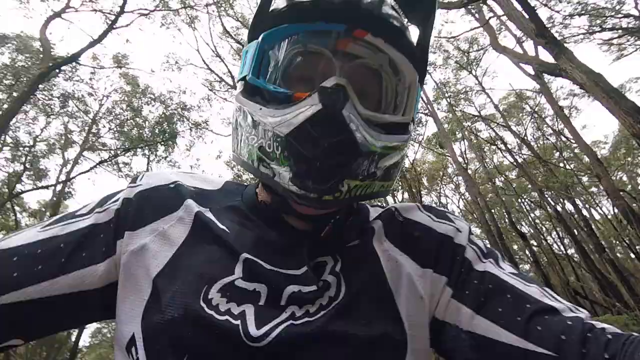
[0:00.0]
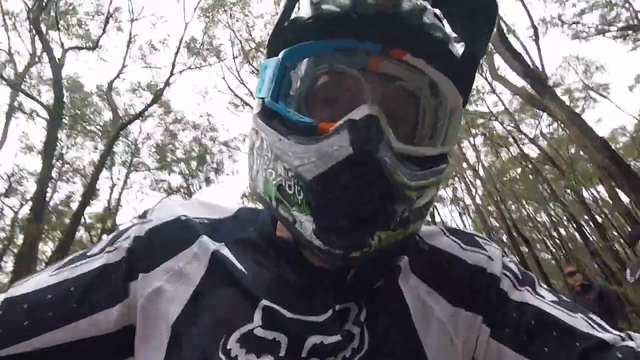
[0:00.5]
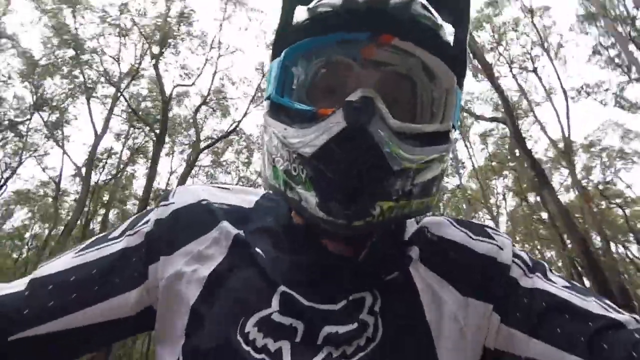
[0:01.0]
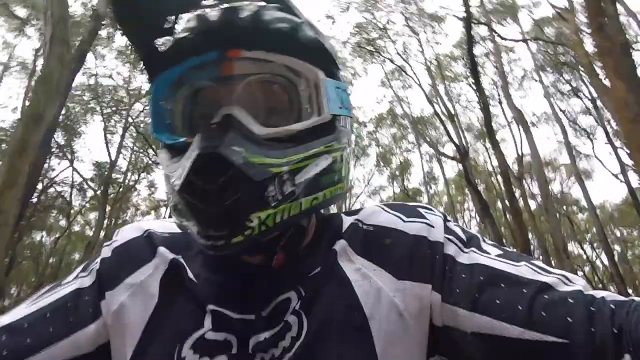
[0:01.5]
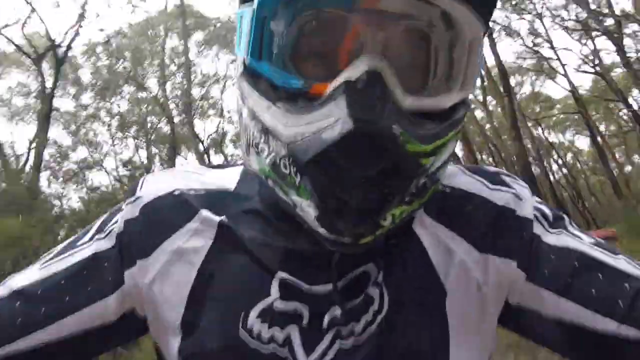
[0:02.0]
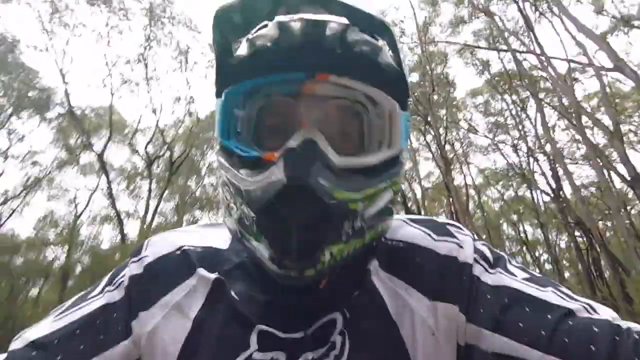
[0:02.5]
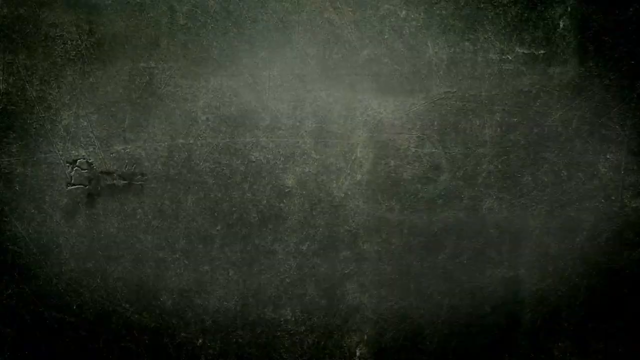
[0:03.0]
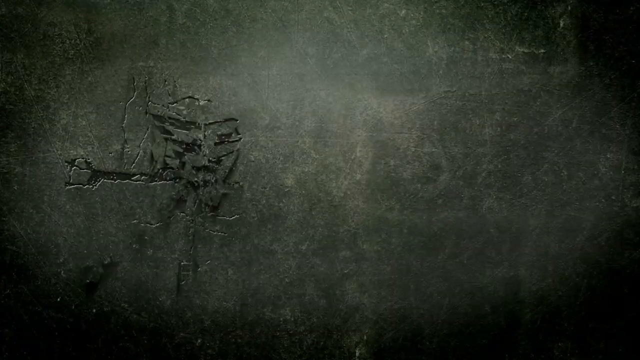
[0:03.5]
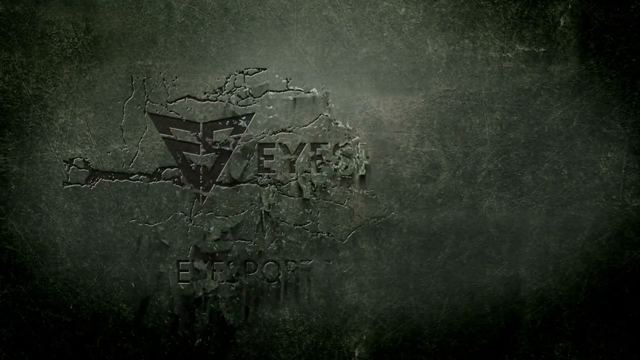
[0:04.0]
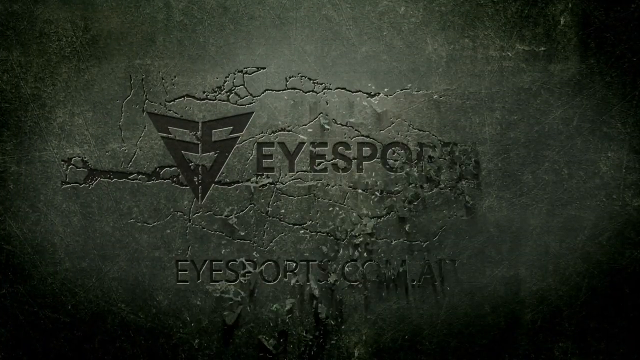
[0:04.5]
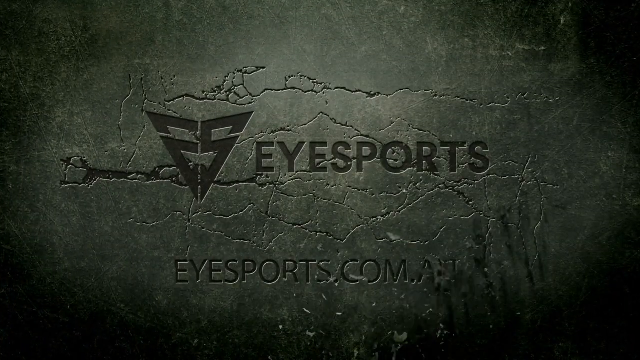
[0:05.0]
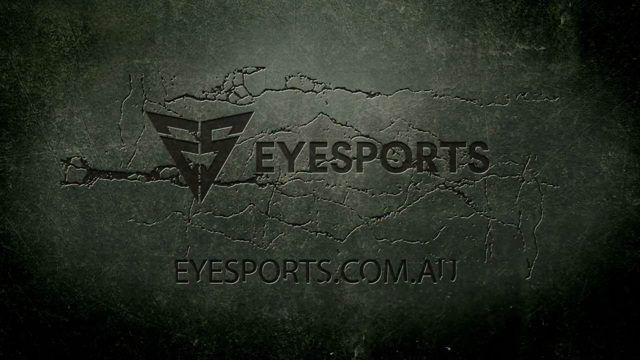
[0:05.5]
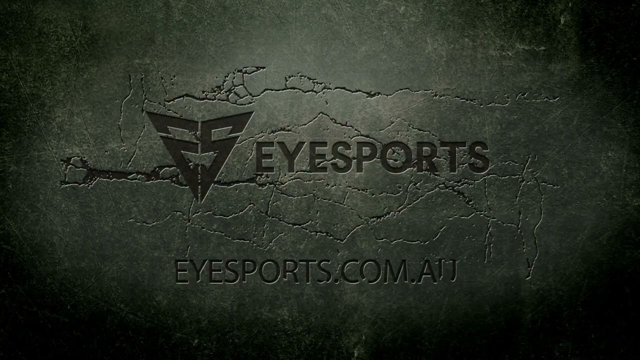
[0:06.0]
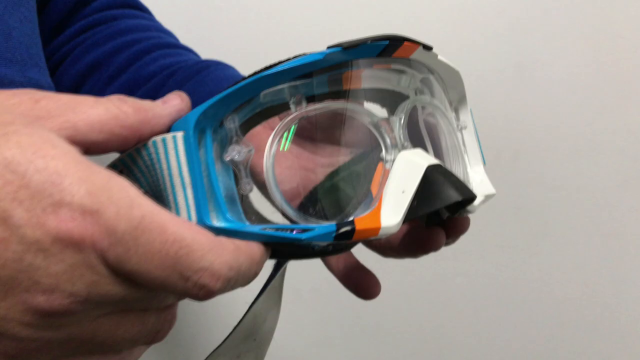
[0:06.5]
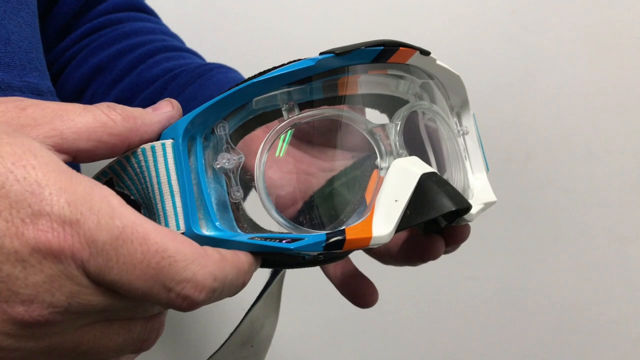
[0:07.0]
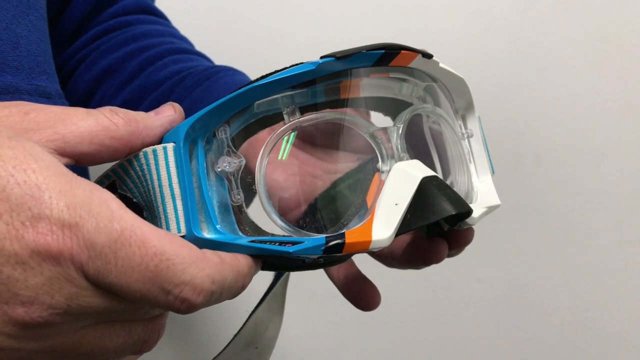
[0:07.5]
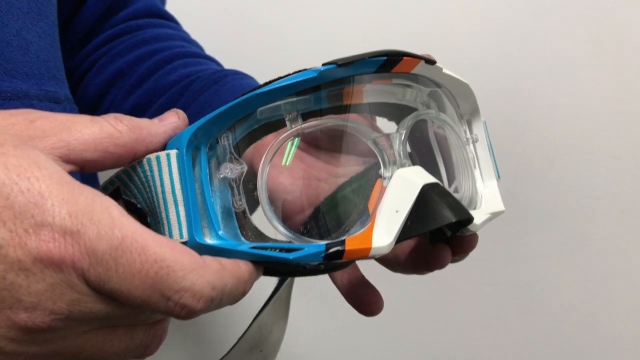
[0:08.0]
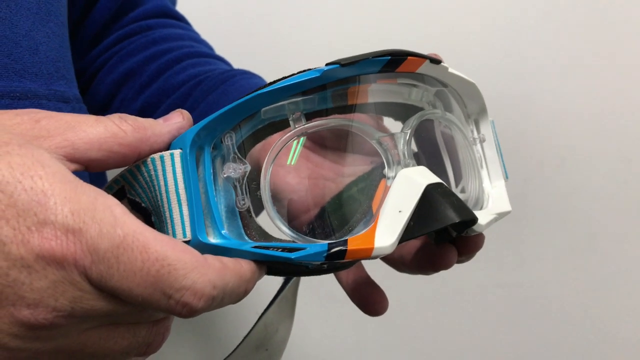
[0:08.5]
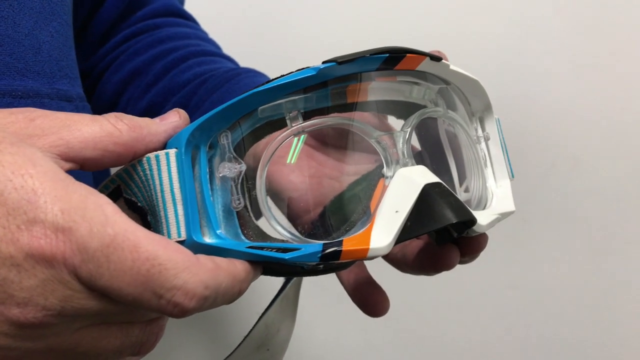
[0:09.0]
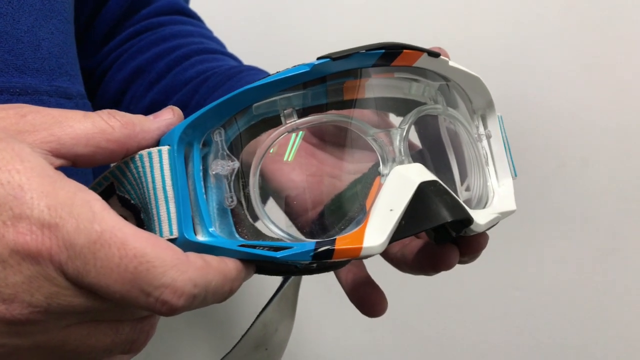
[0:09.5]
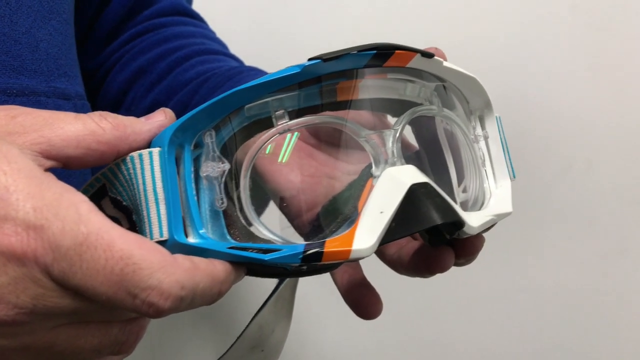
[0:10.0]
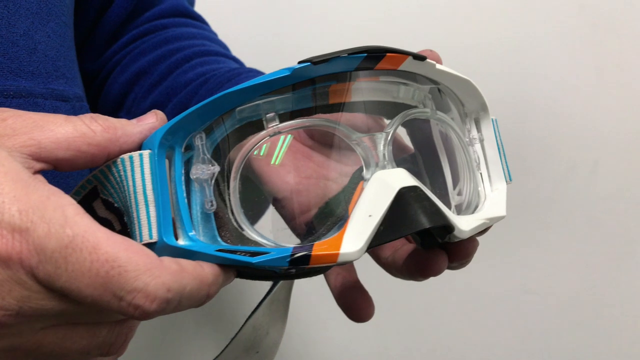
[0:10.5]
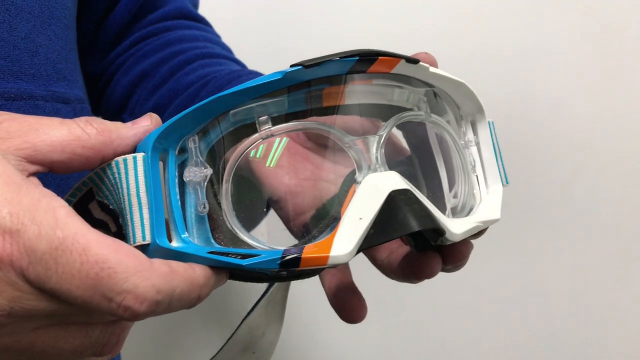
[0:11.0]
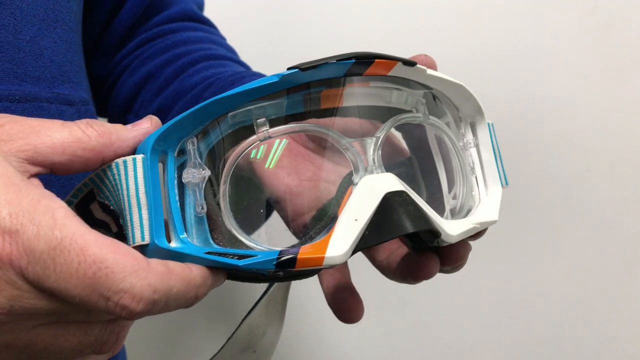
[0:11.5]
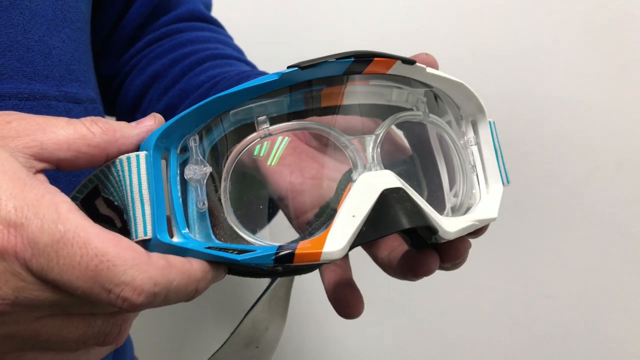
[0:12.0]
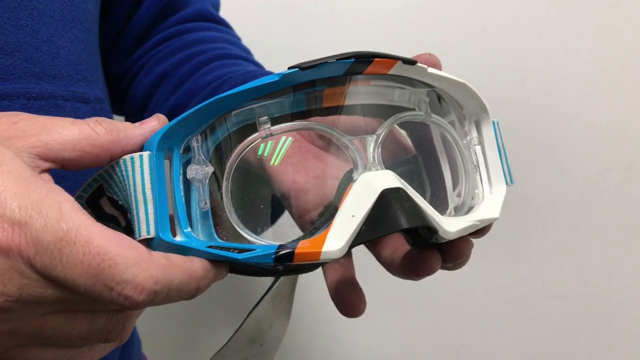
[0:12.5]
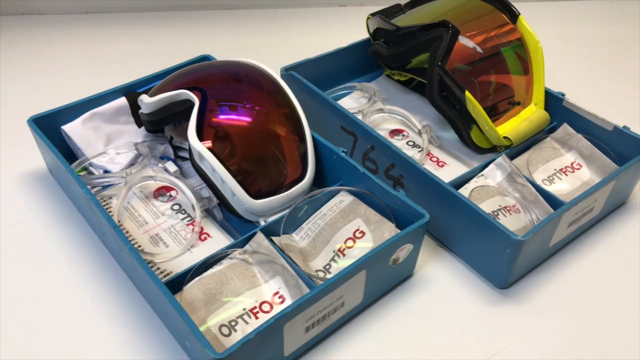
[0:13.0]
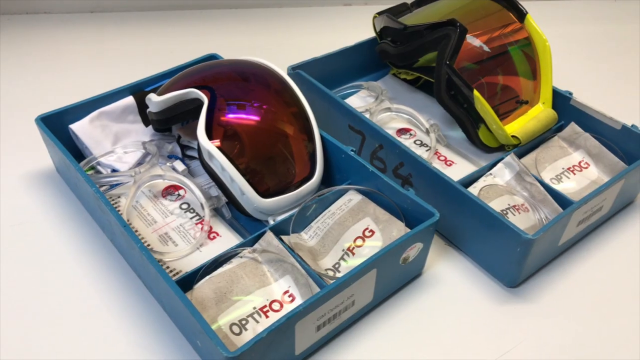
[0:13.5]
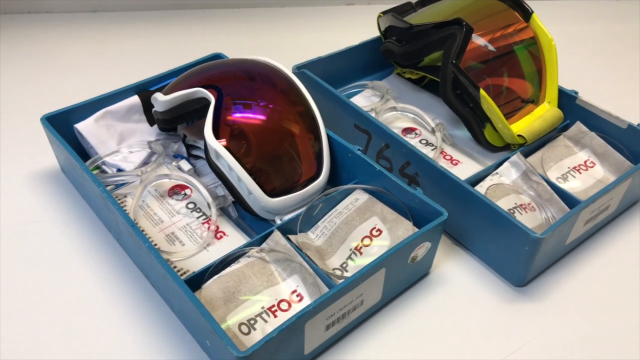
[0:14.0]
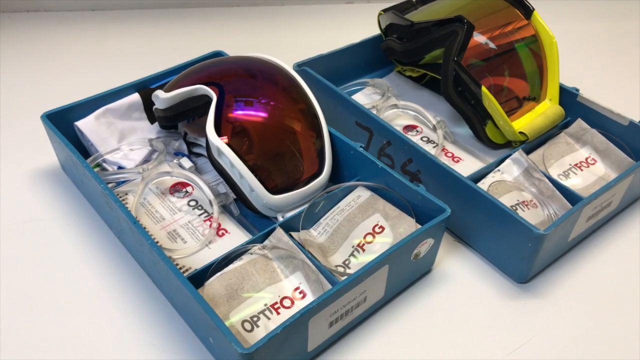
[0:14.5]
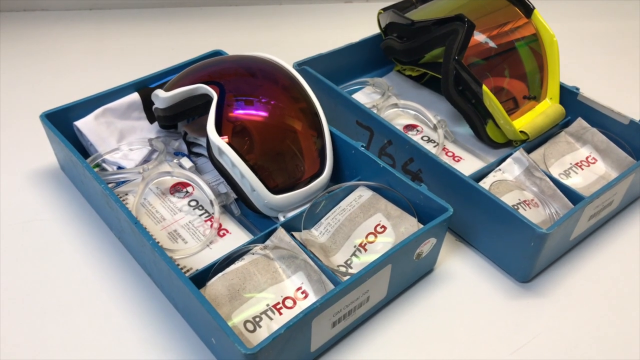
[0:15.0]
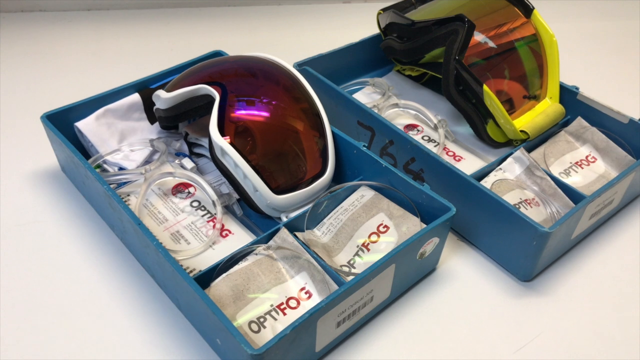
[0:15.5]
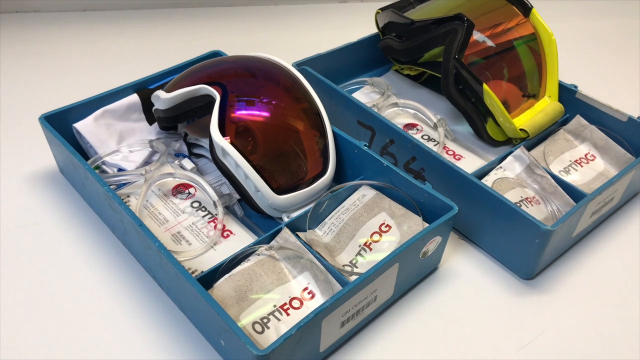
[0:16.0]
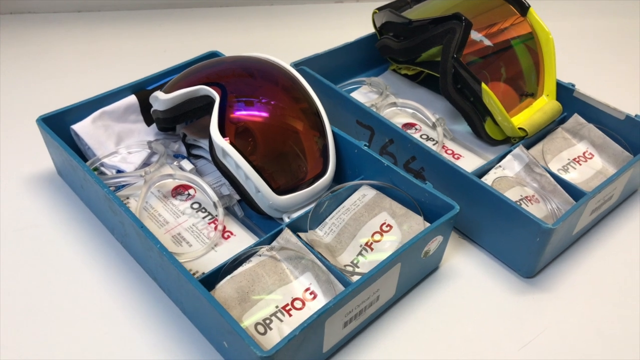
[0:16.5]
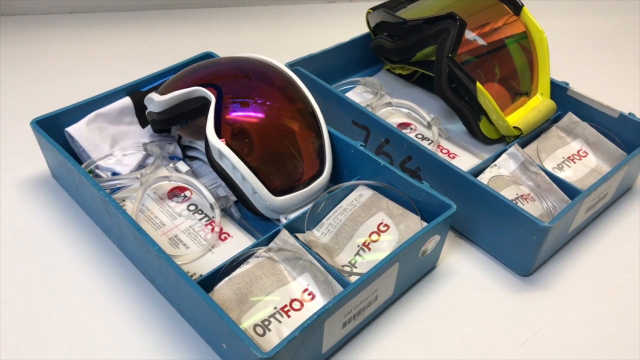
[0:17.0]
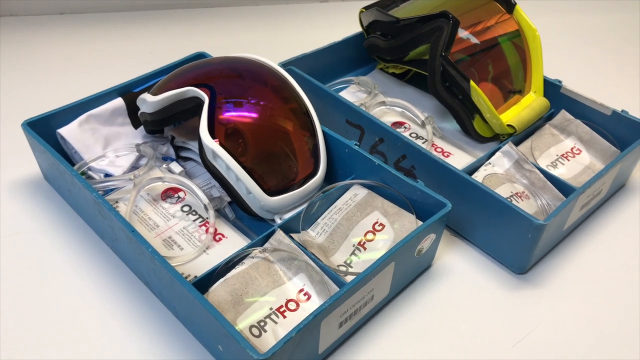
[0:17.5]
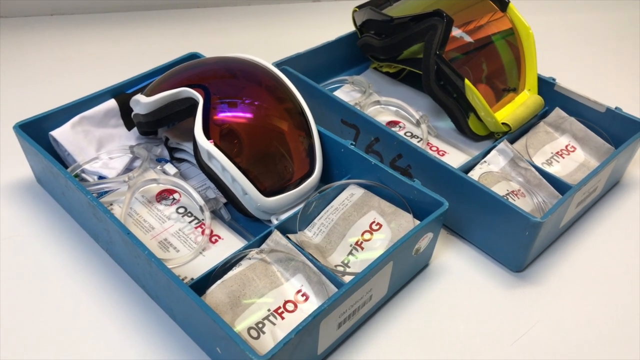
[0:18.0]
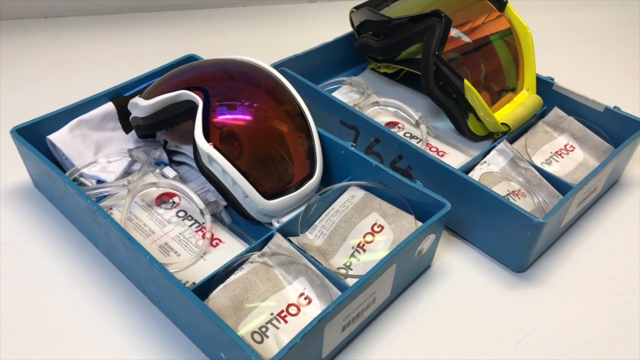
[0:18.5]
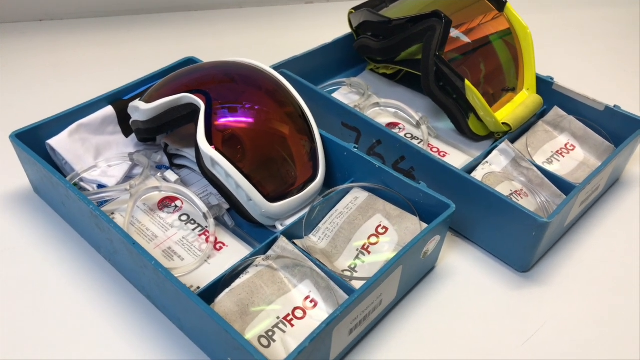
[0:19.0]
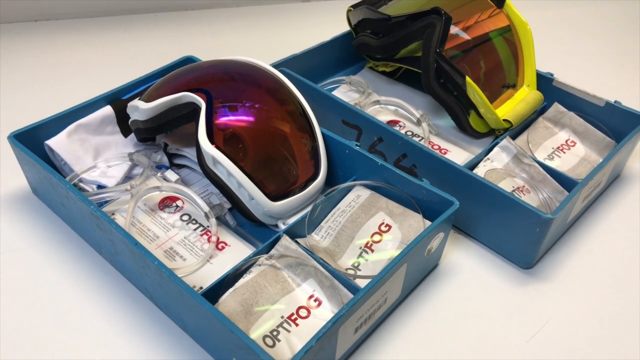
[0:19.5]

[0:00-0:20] A person wearing a motorcycle helmet and a full motorcycle outfit rides a dirt bike in a forest, shown in a close-up animation. The video then transitions to what almost looks like the start of a TV show commercial or advertisement, or some sort of company banner, possibly an advertisement about dirt bike eyewear. It then transitions to a screen showing off eyewear, or goggles, that could be used on dirt bikes or motorcycles, with a close-up on sports goggles in an almost advertisement-like transition. The setting changes three times, and the main subject is the rider on the dirt bike.